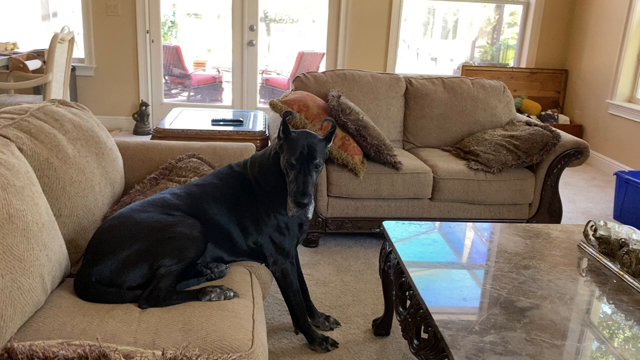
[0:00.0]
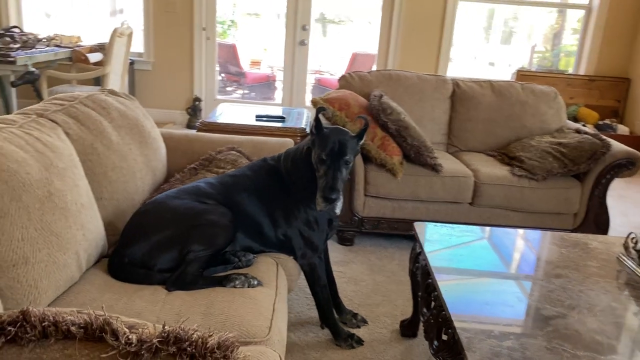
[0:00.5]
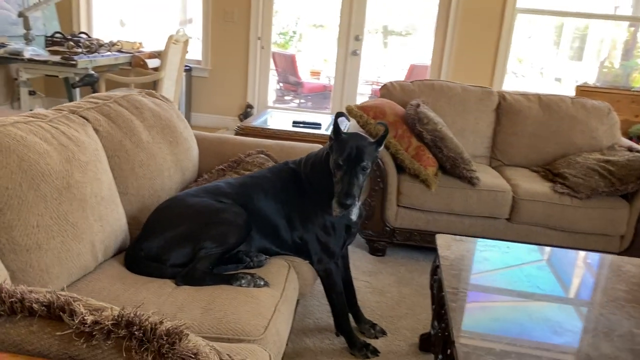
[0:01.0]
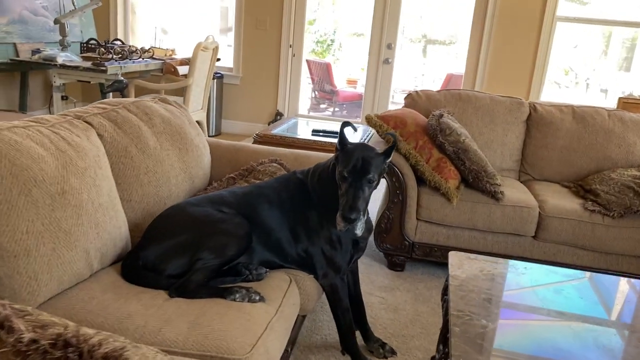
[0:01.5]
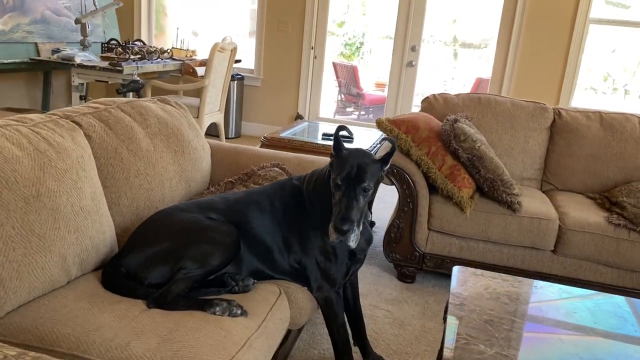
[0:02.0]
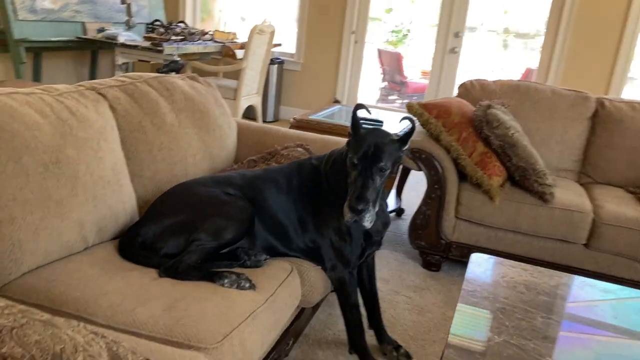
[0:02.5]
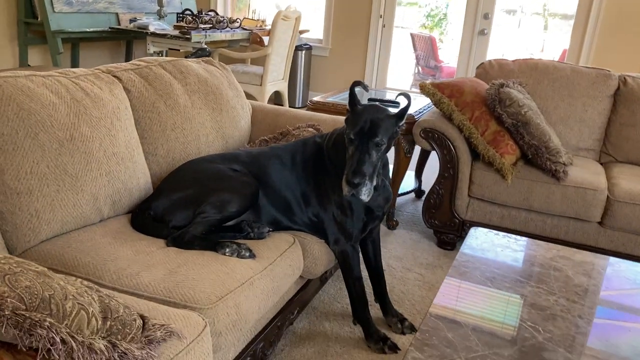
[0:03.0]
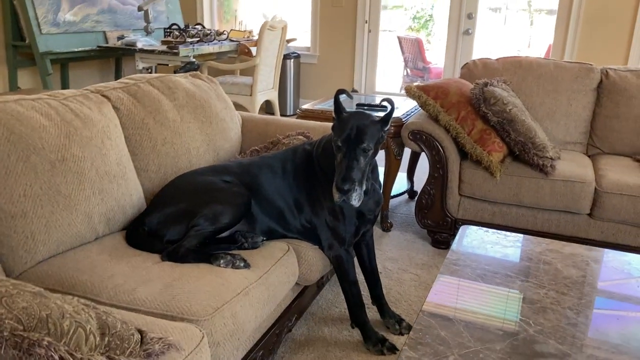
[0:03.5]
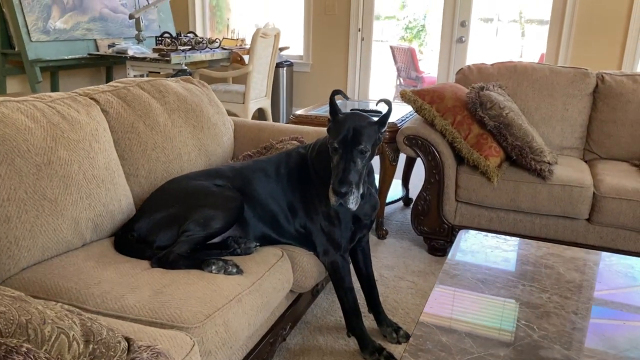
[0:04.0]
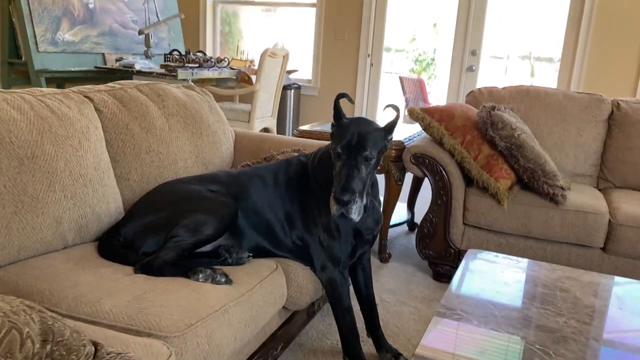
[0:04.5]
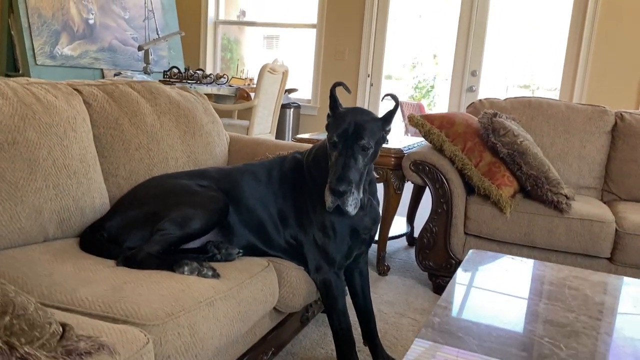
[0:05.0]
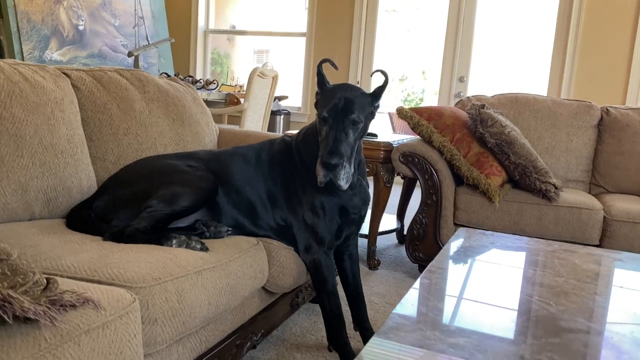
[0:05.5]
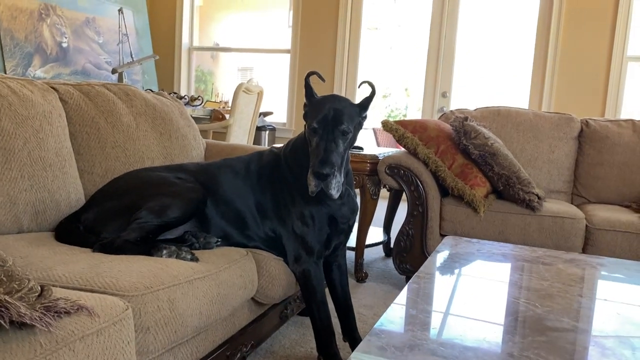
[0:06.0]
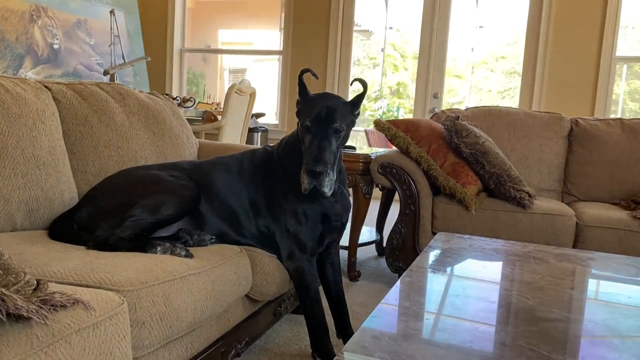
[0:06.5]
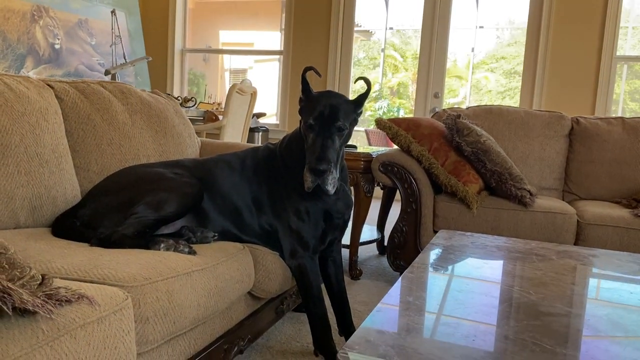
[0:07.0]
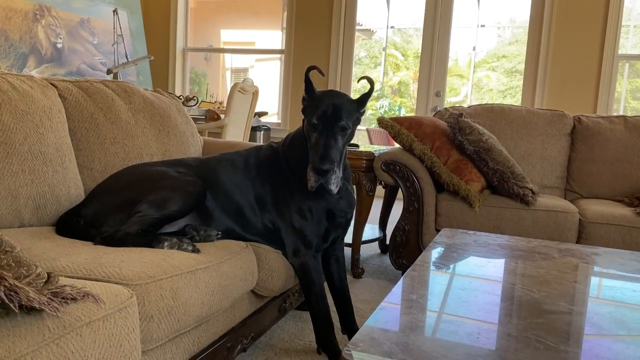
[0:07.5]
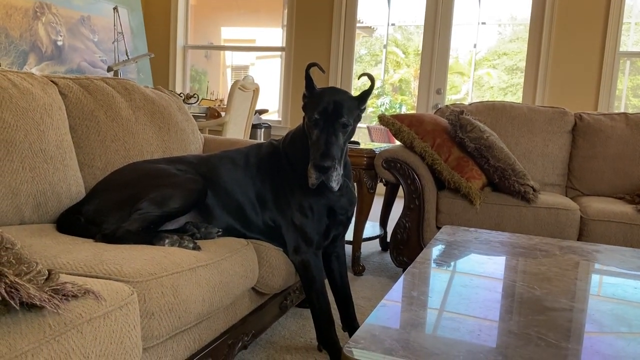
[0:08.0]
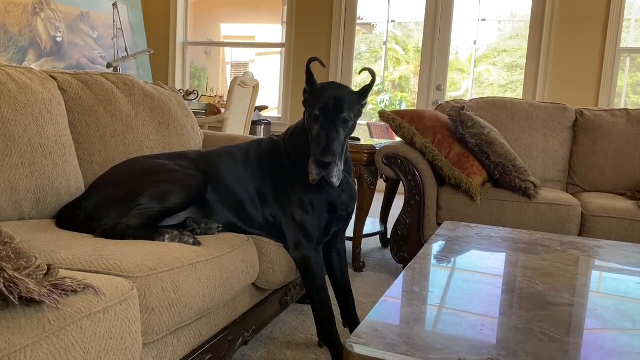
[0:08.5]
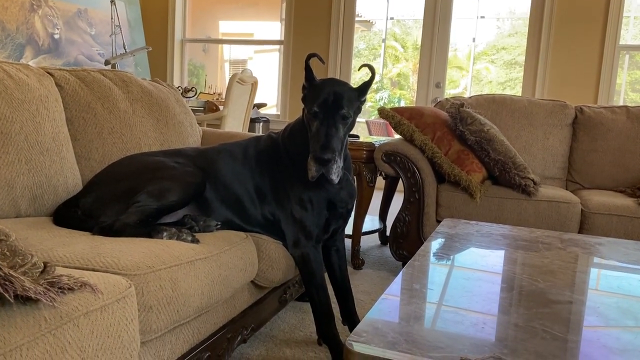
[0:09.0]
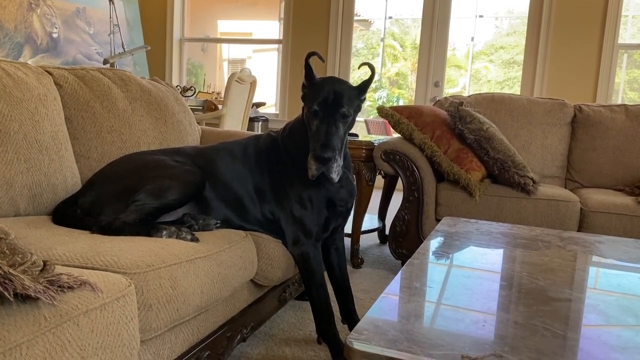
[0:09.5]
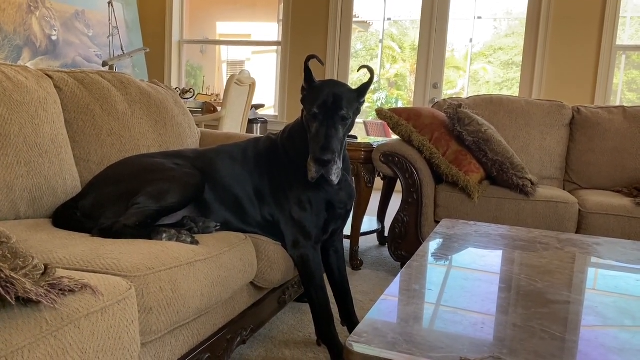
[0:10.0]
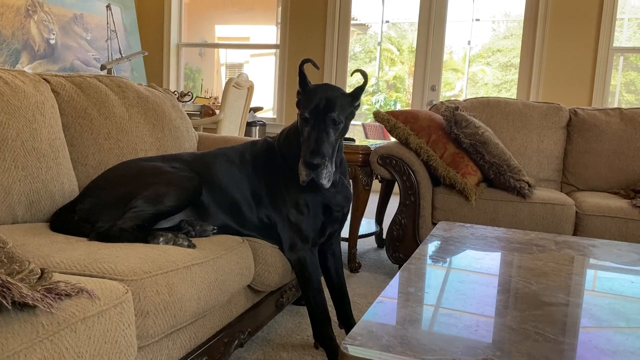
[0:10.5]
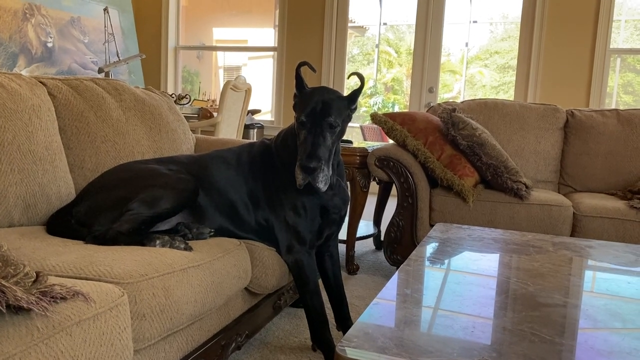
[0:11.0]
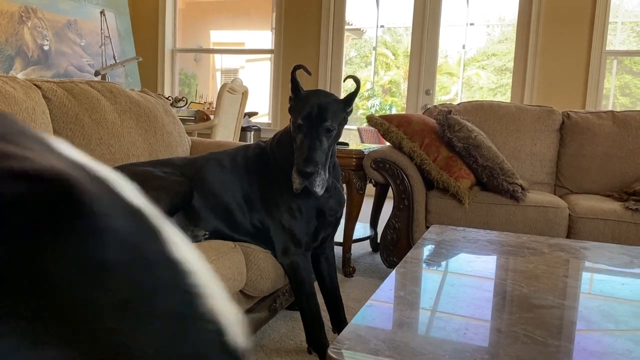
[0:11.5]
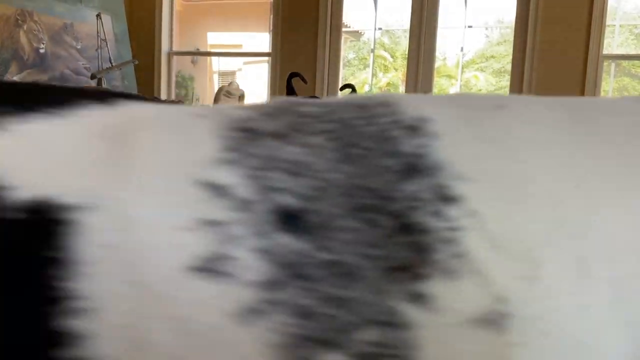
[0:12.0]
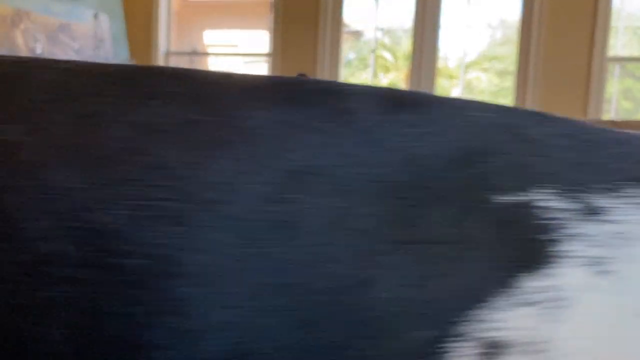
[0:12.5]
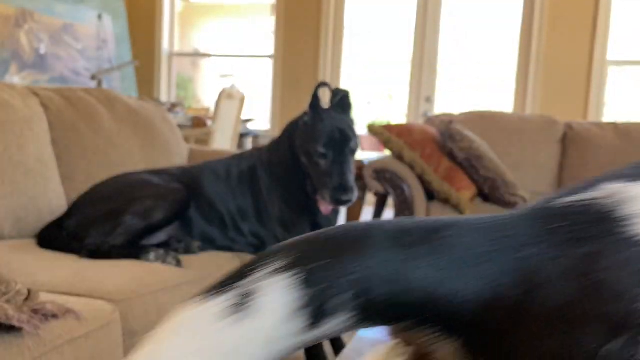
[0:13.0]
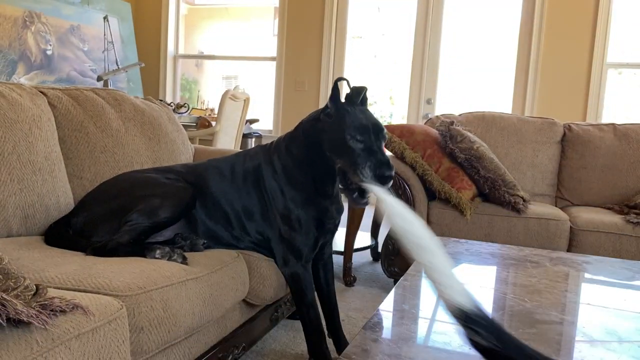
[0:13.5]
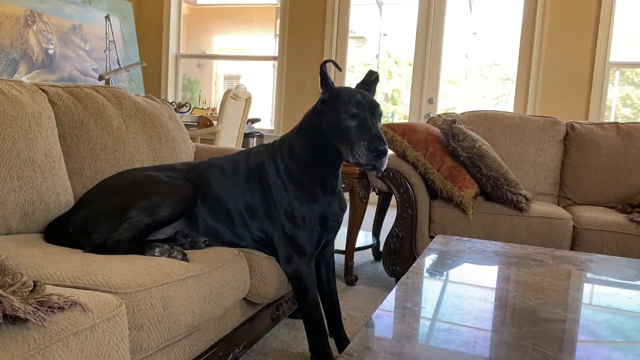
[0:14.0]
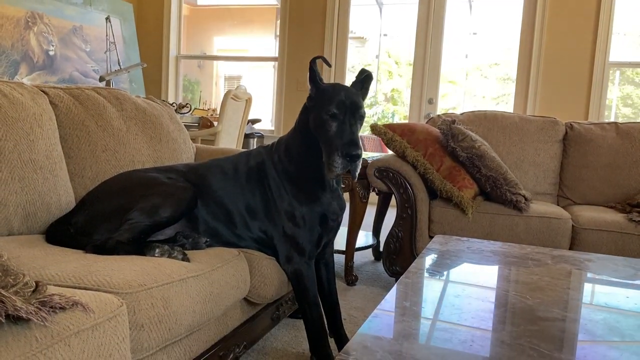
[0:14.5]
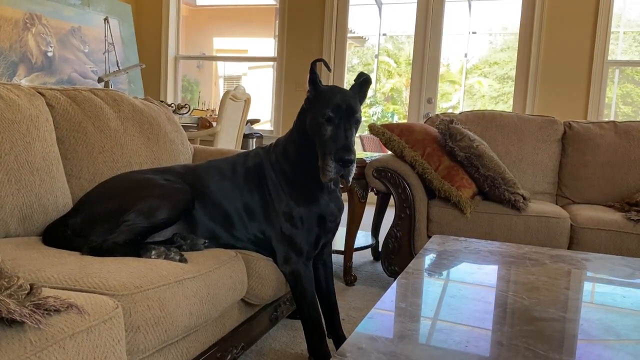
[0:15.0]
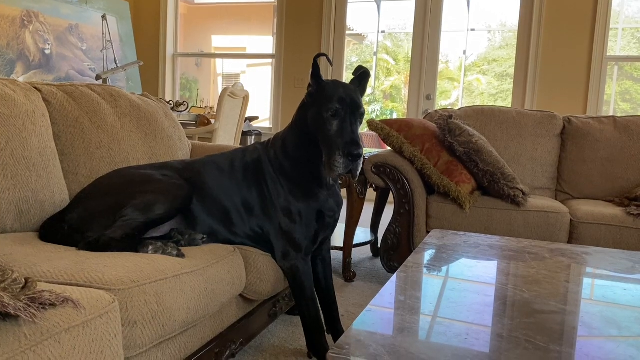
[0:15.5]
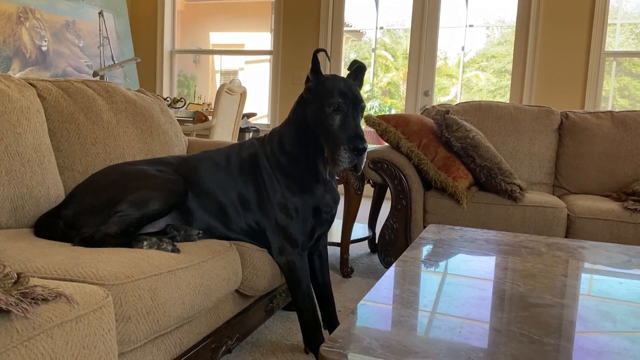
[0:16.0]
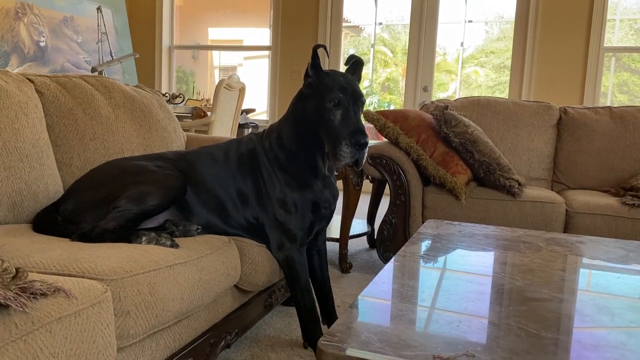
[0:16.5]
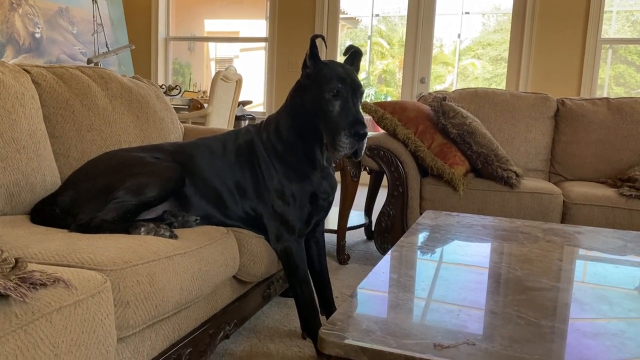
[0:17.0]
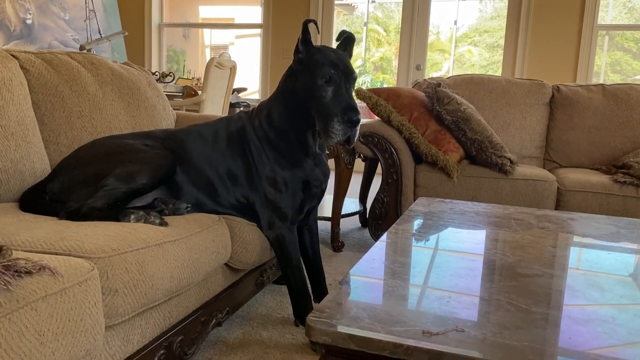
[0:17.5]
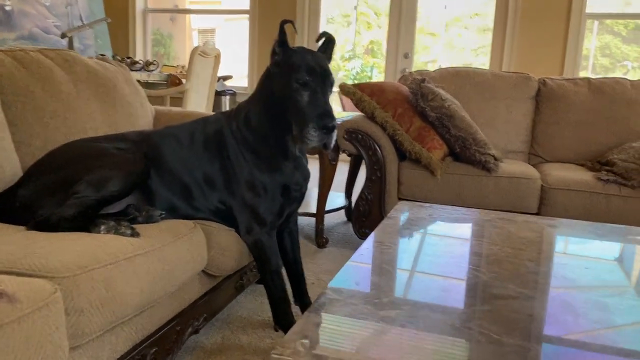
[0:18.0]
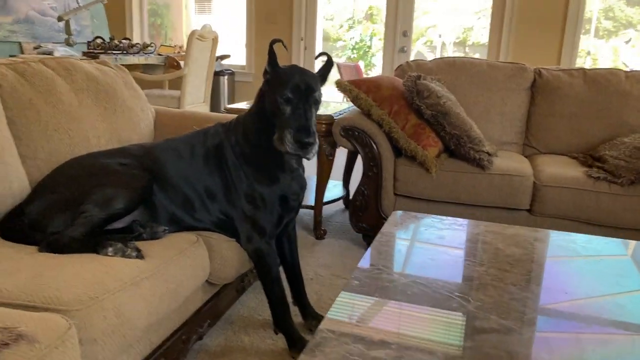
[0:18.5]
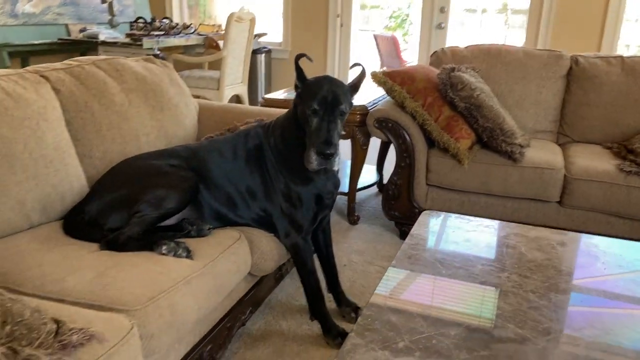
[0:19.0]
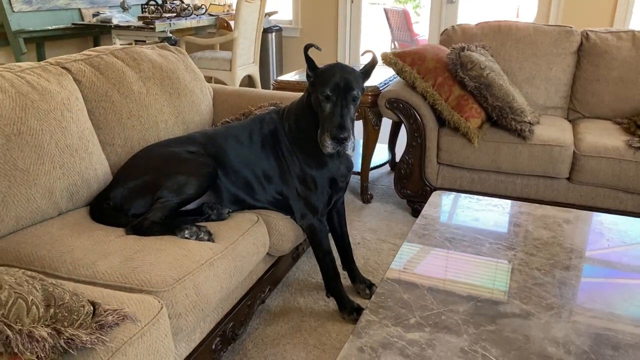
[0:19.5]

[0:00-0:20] A large black dog is sitting on a couch inside a living room, partially off the couch with its front legs resting on the floor in front of it. Its ears are pulled back and look irregularly shaped and curved. There is a marble table in the center of the room with light from the window reflecting off it. The dog has large jowls and its face is slightly white. The person recording bends down a bit to get a better view of the dog's face. Another dog, black with white spots, walks across the camera; it also seems very big and is possibly the same breed as the dog on the couch. The dog on the couch seems to watch the other dog walk across before focusing its eyes back on the person recording.